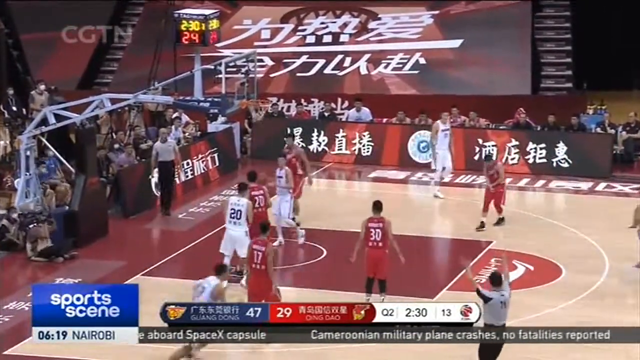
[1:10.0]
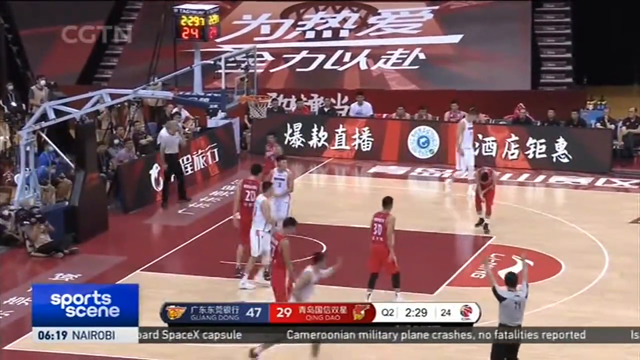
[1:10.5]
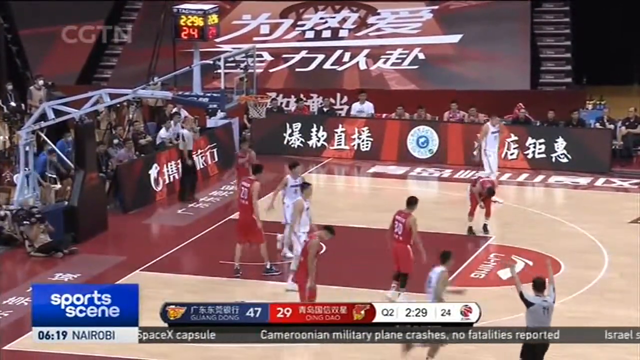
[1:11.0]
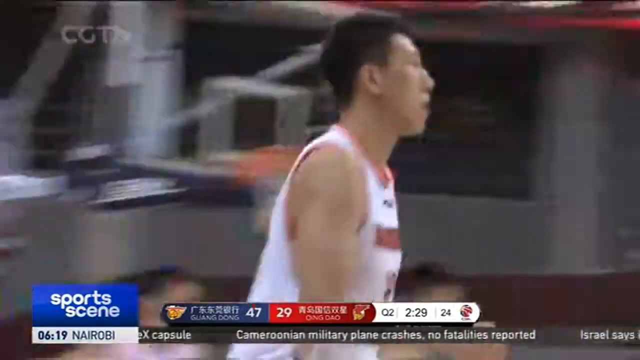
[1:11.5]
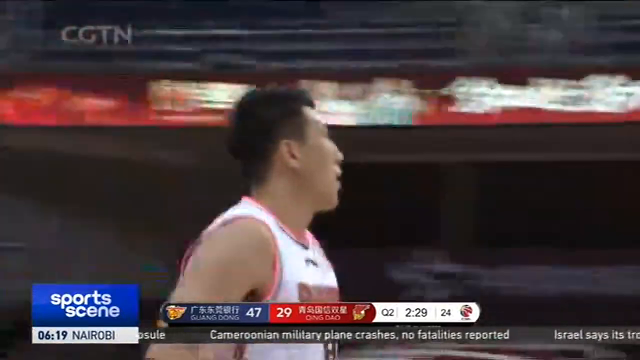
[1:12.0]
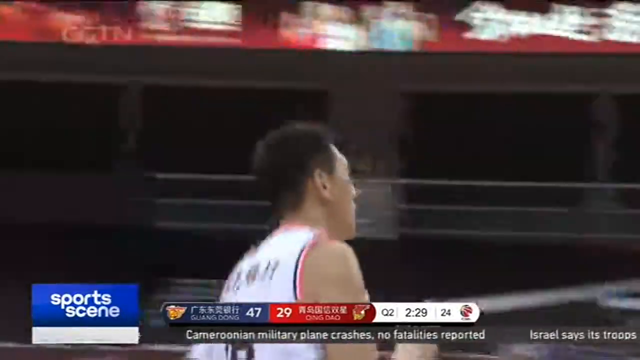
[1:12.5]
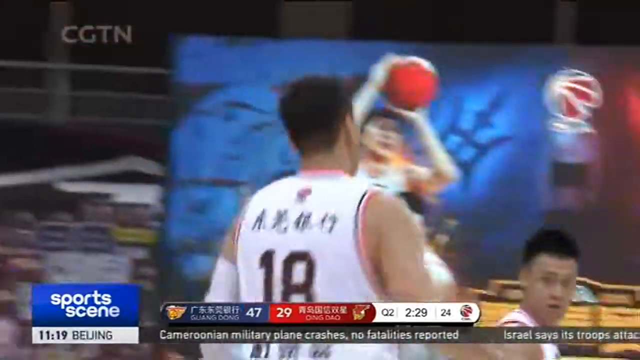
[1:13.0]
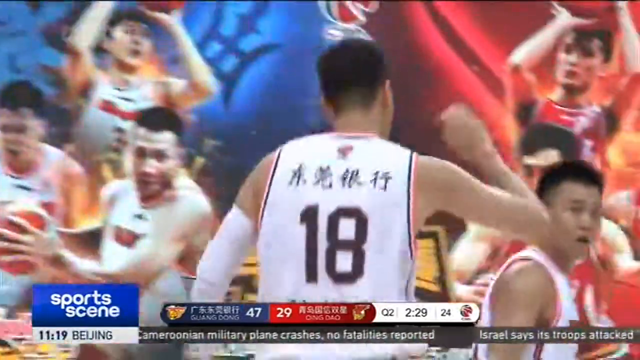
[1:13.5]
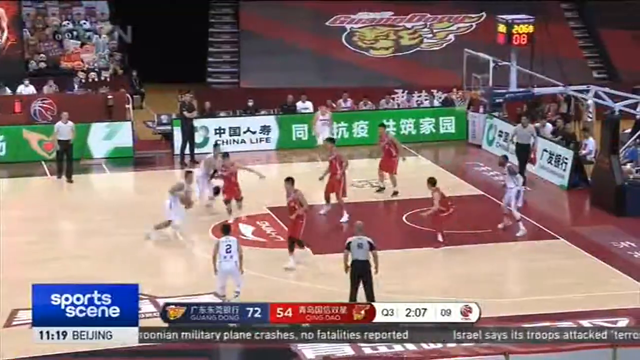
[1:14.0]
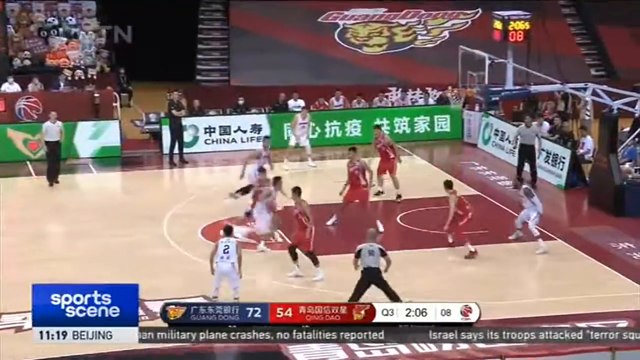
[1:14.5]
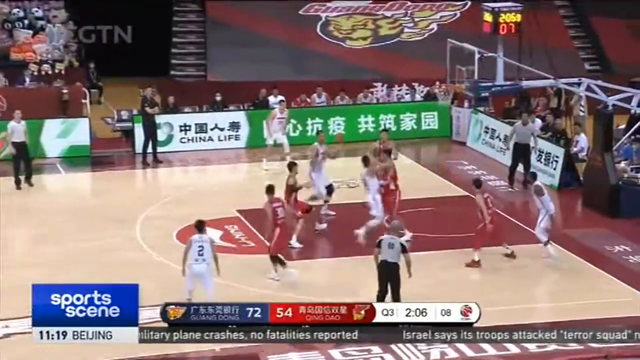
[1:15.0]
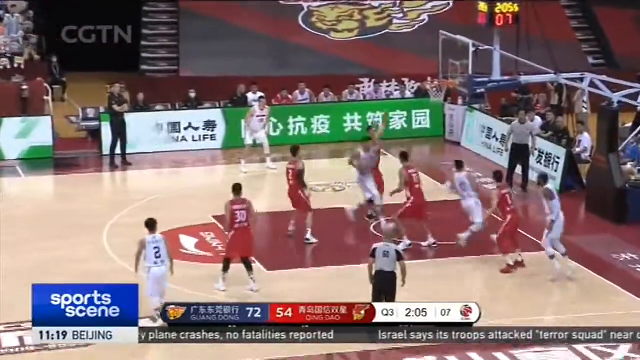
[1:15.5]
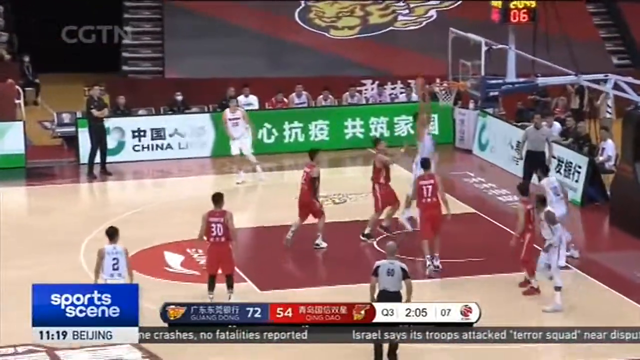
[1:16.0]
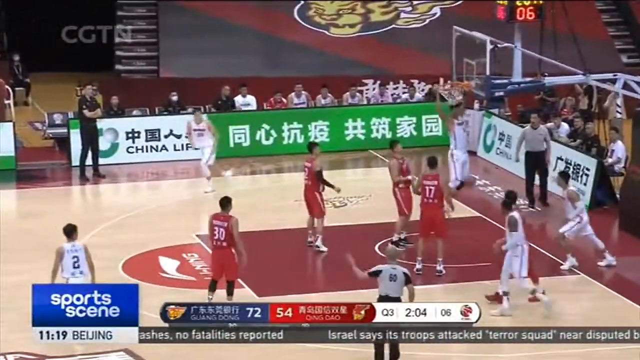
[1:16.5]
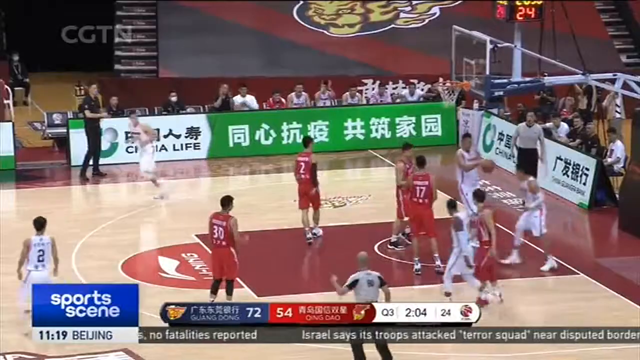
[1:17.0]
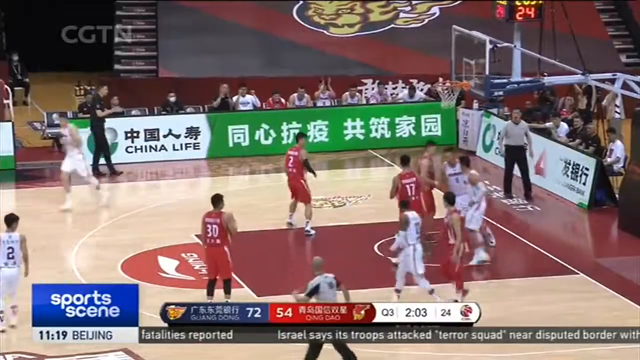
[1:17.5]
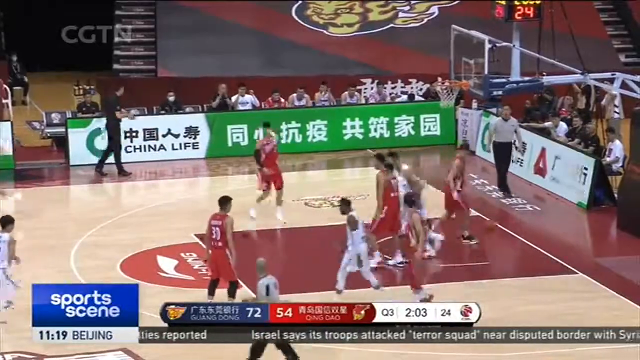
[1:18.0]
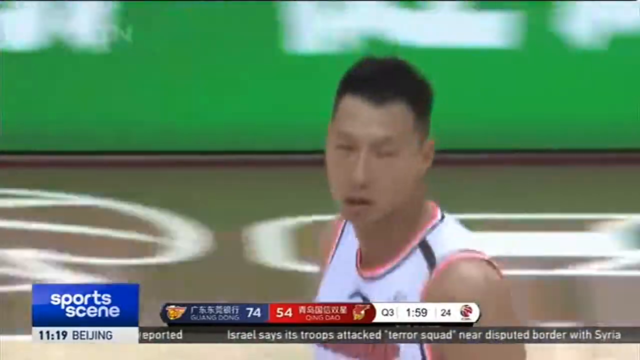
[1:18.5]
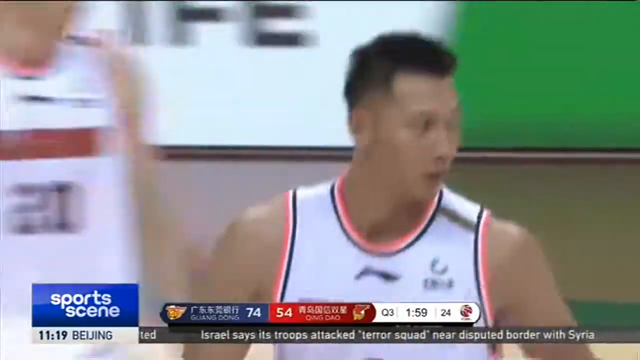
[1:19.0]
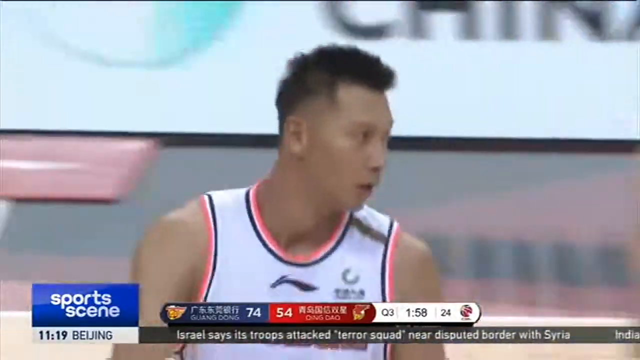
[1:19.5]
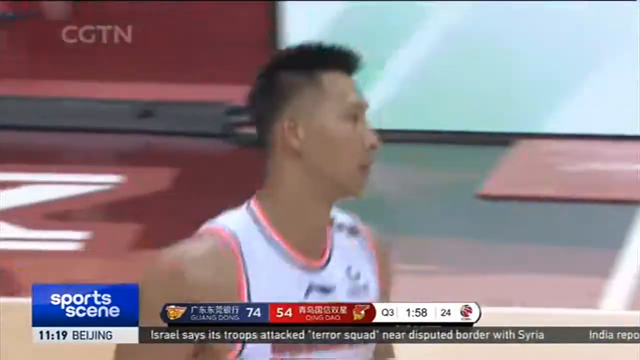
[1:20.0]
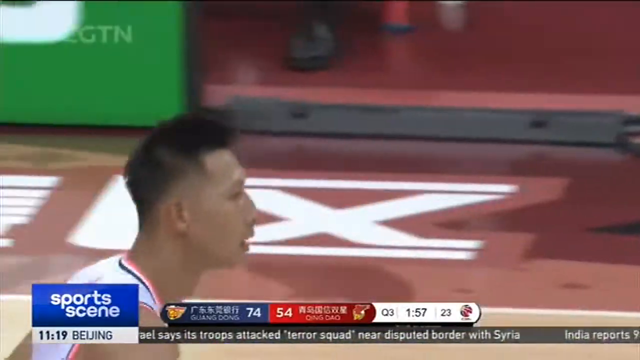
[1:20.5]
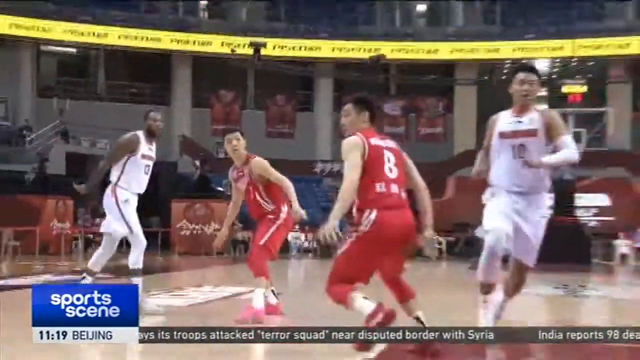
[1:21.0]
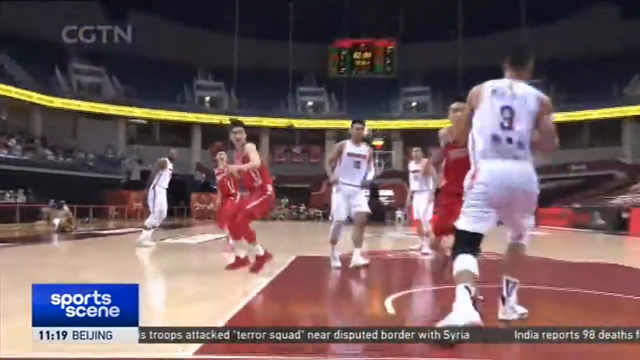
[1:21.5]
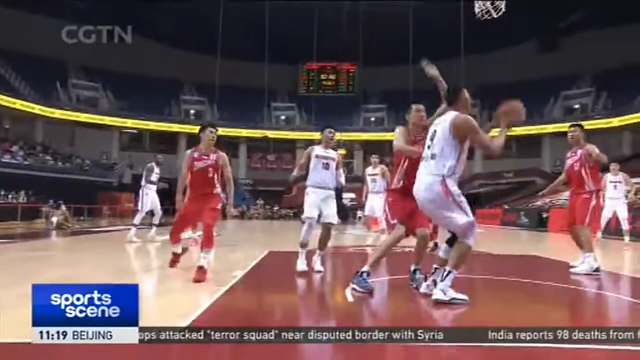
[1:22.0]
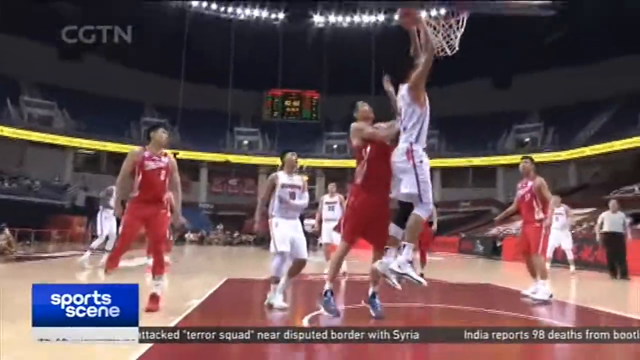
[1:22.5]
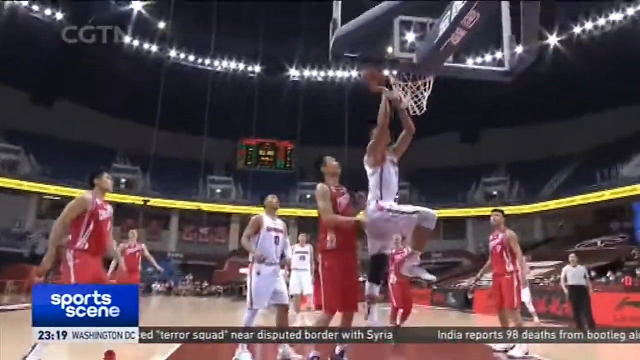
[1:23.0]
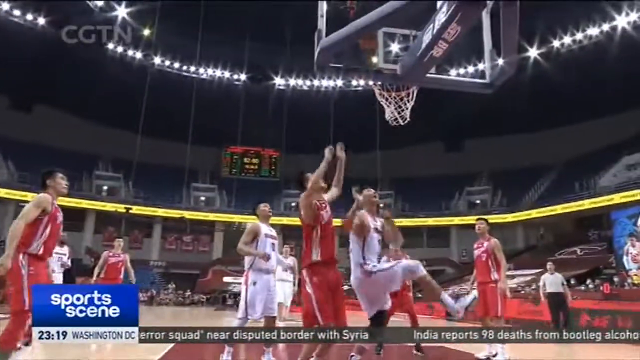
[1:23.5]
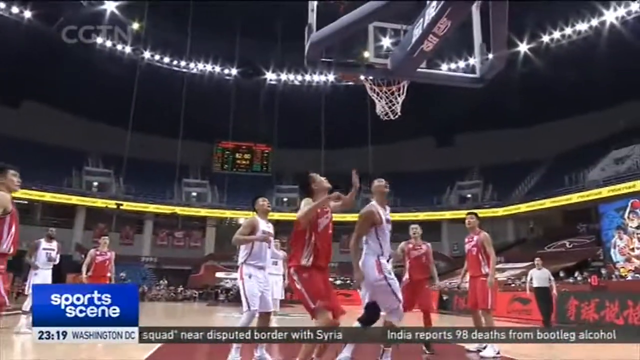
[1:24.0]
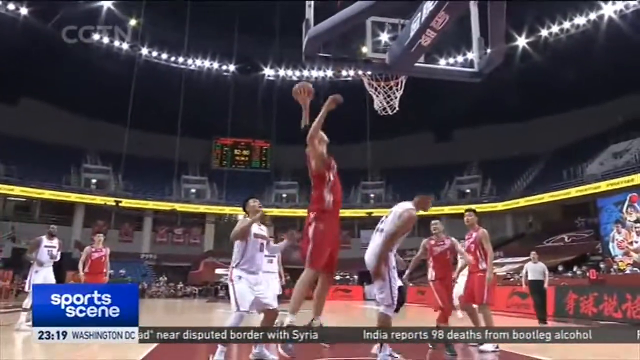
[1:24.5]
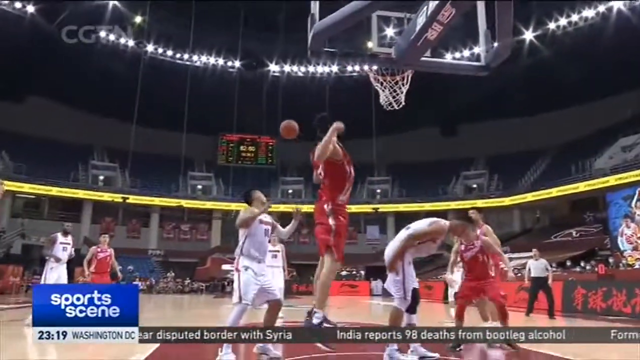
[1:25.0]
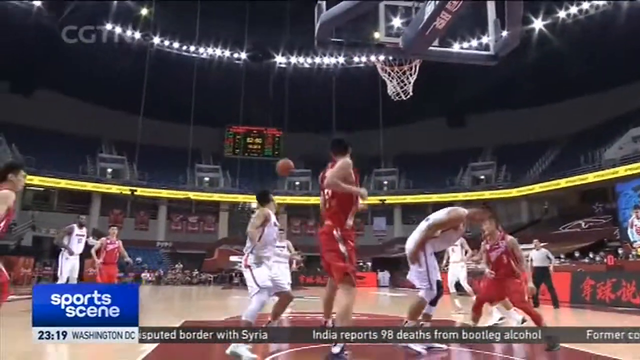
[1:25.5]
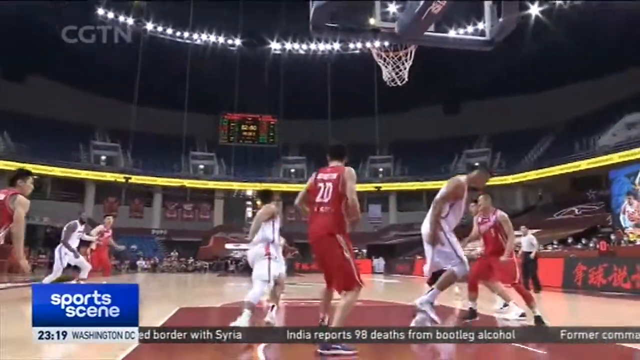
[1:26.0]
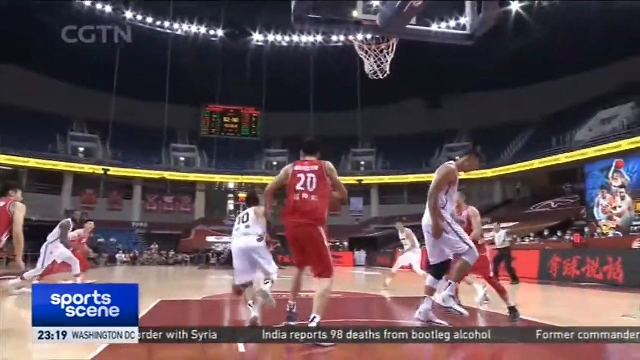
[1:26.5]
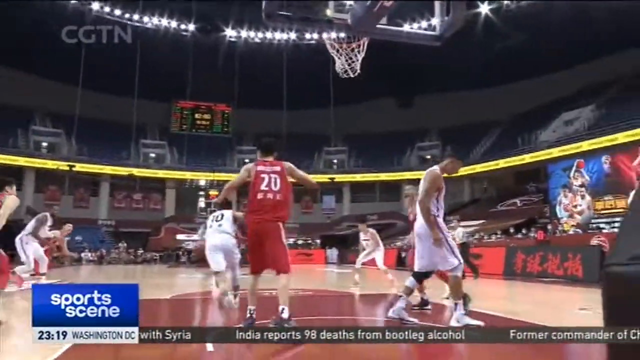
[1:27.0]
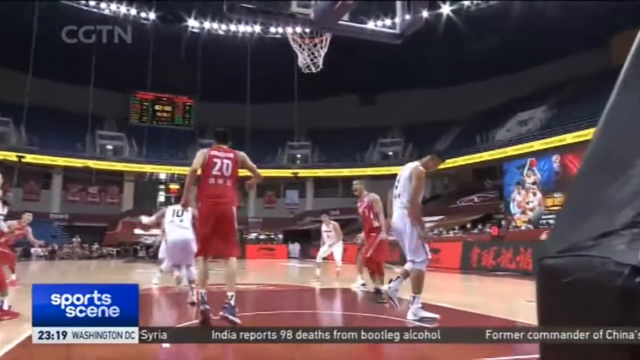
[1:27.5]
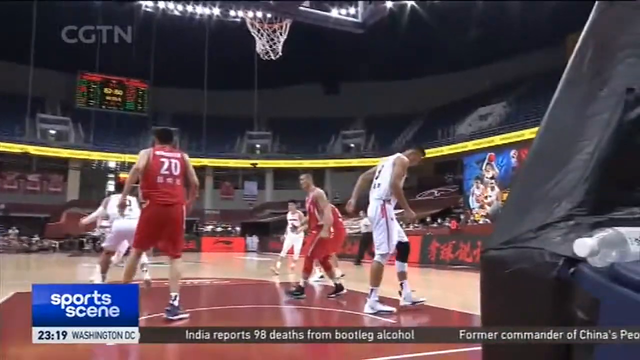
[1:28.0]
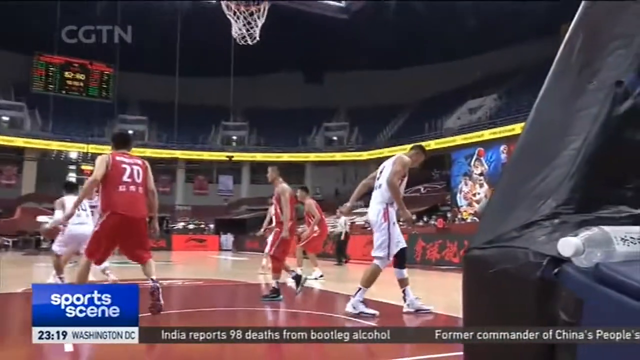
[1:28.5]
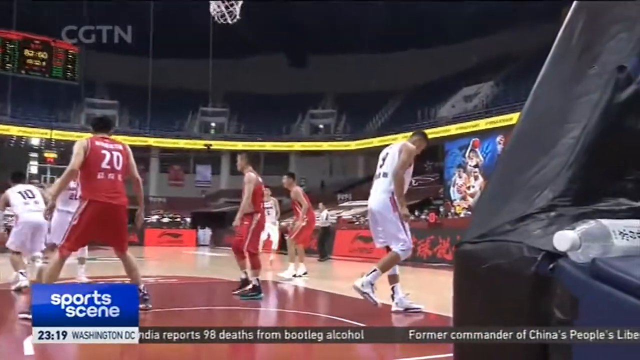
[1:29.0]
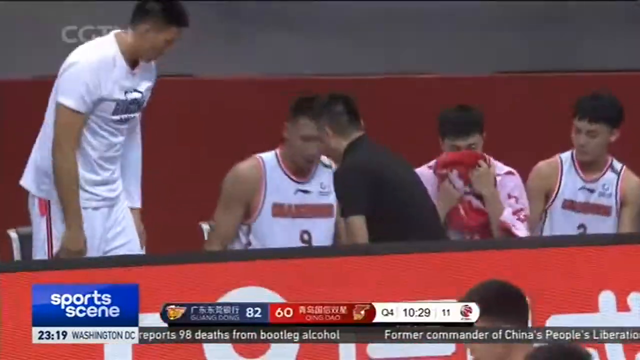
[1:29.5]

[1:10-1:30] Number 18 of the blue team scores again and gets a handshake or something similar from a teammate who jogs up to him. The white team has the ball, up 72 to 54. A player at the top of the key dribbles in with his right hand and makes a no-look pass to a player in the paint, who comes out between two defenders for a simple dunk. A zoomed-in shot shows the player the news anchor talked about earlier jogging back. He apparently gets a leg injury and hobbles; he wears a wrap on his left knee, suggesting an already bad knee. He lands awkwardly under the rim and sits down afterward. Around the arena are digital signs, and people on the other side sit watching the game. A narrow staircase is past a hanging banner, above the seated people. A cube-shaped scoreboard shows the time remaining in yellow and the shot clock below it in red.